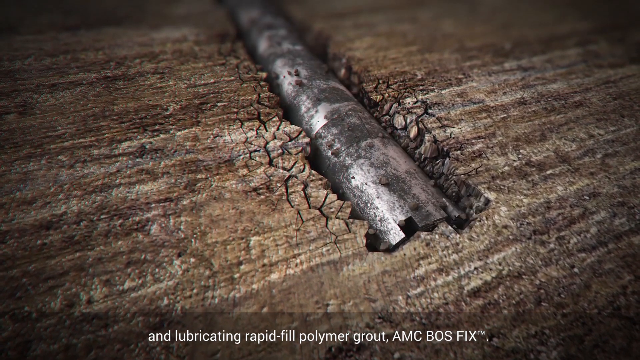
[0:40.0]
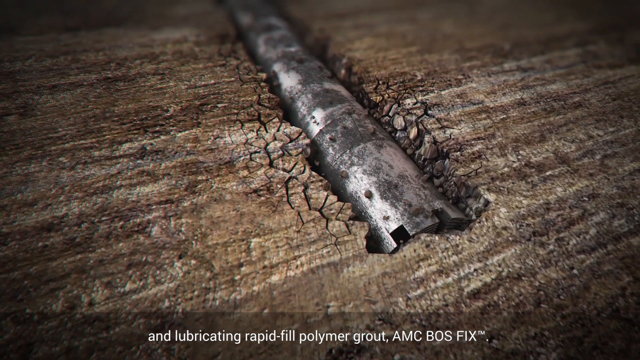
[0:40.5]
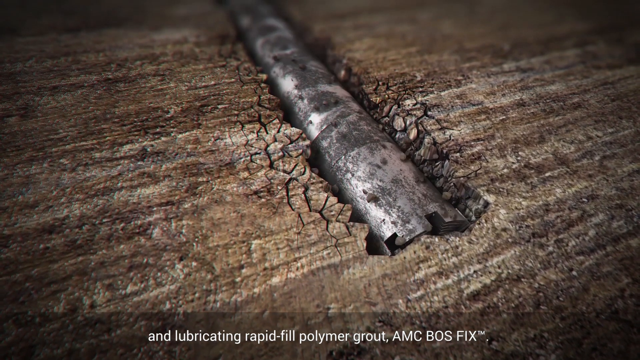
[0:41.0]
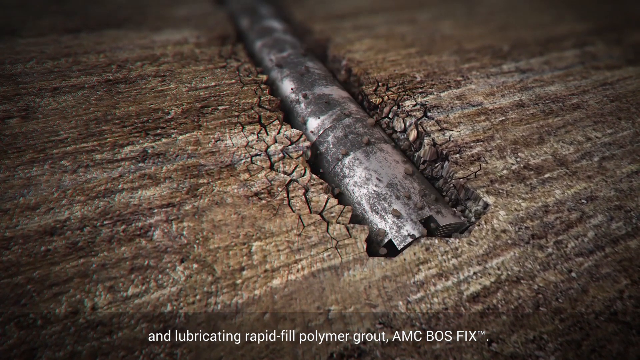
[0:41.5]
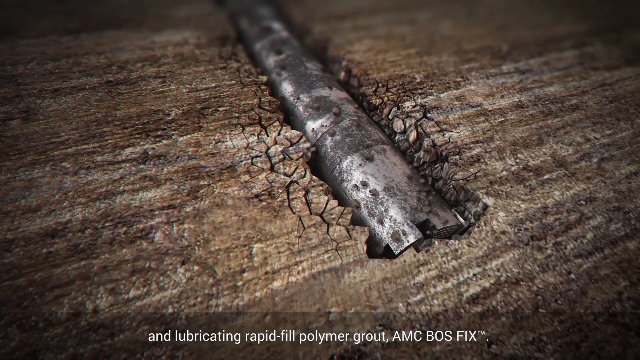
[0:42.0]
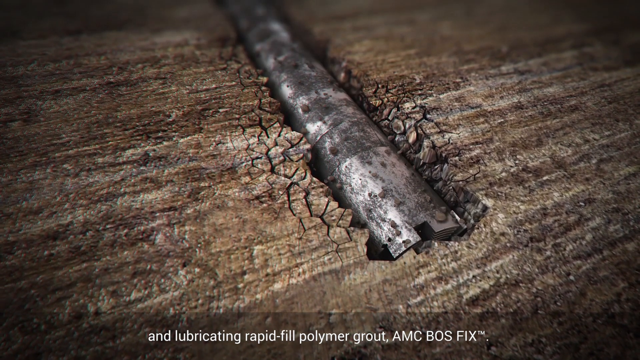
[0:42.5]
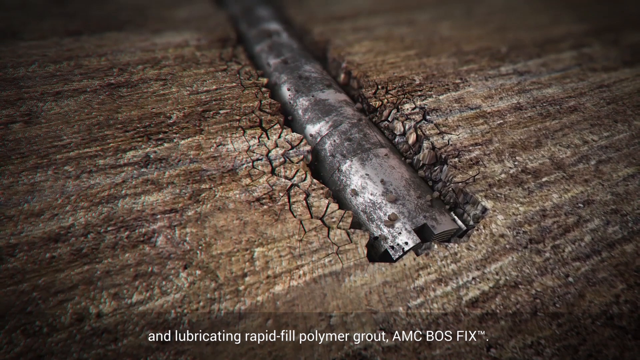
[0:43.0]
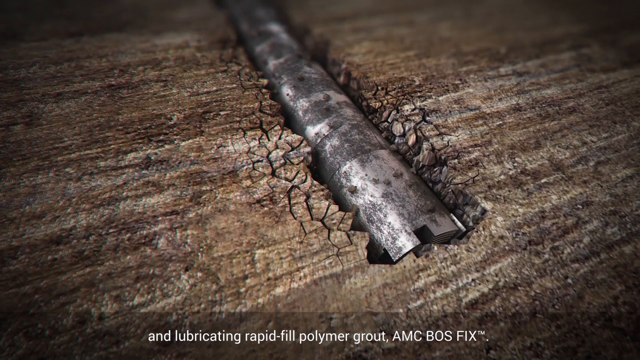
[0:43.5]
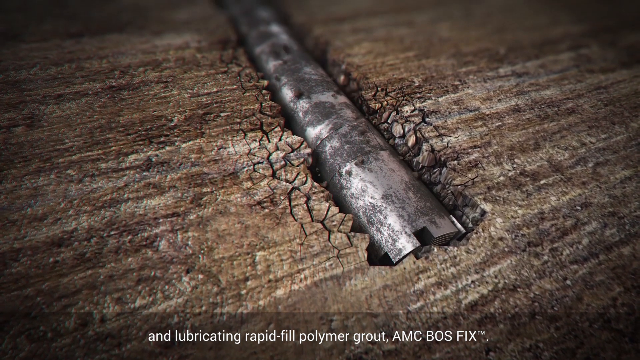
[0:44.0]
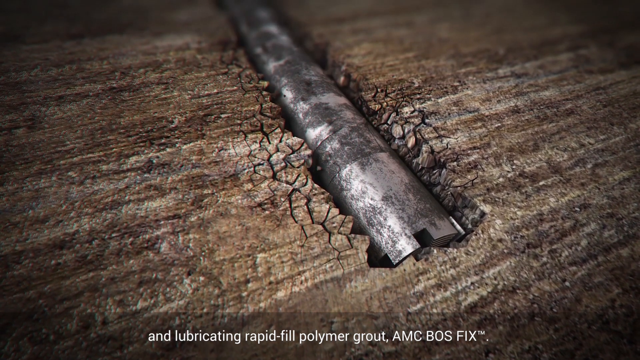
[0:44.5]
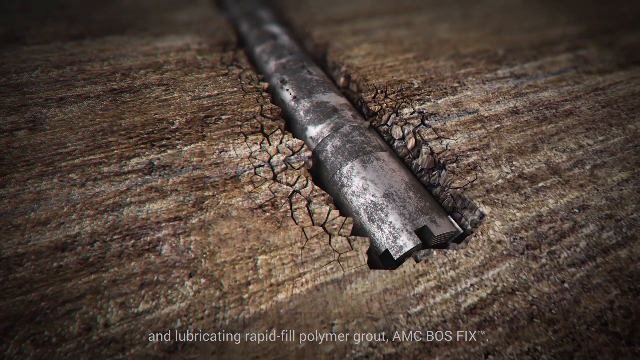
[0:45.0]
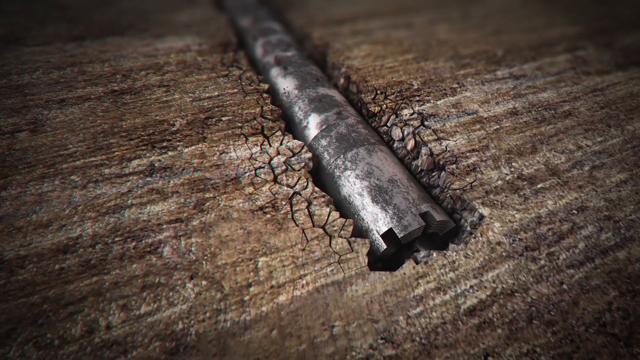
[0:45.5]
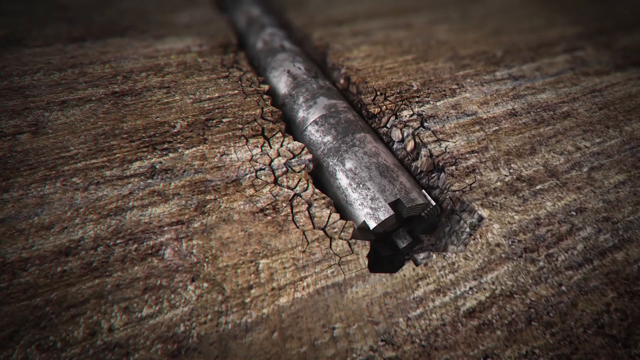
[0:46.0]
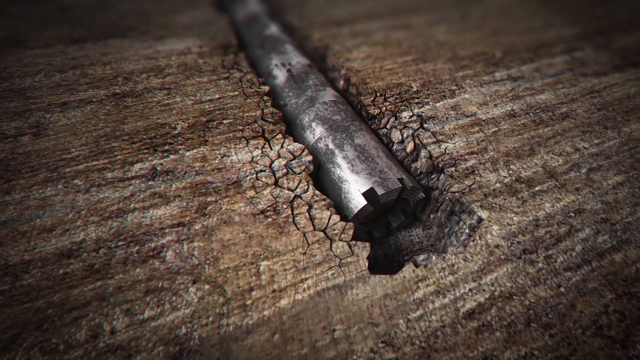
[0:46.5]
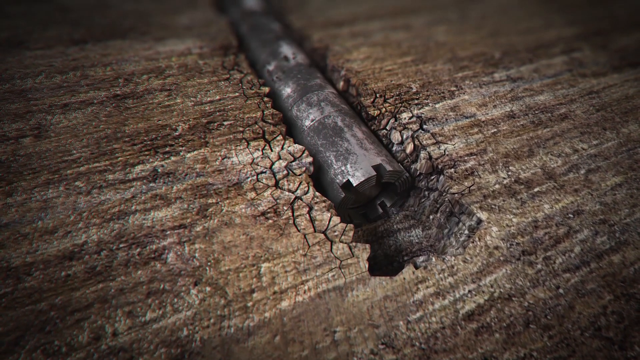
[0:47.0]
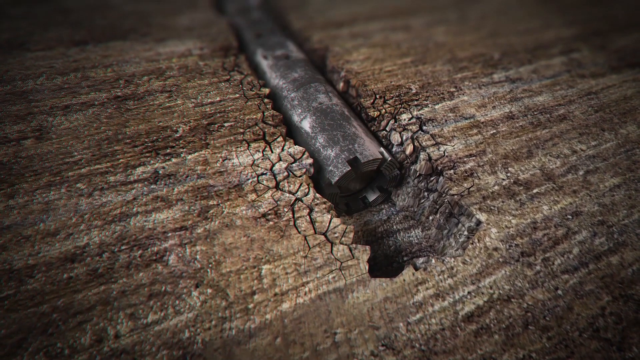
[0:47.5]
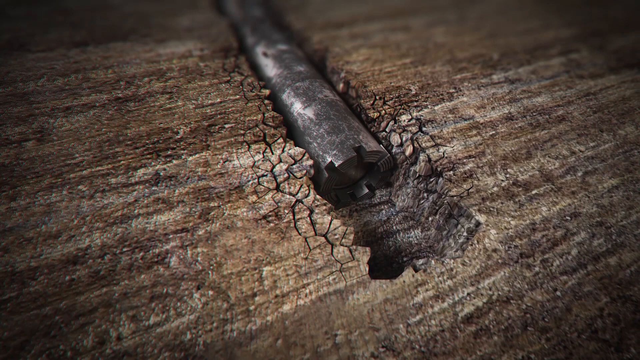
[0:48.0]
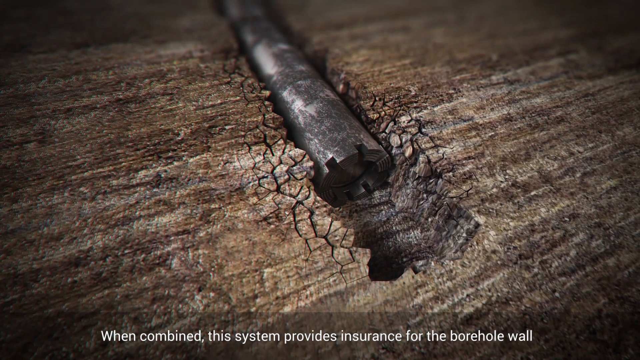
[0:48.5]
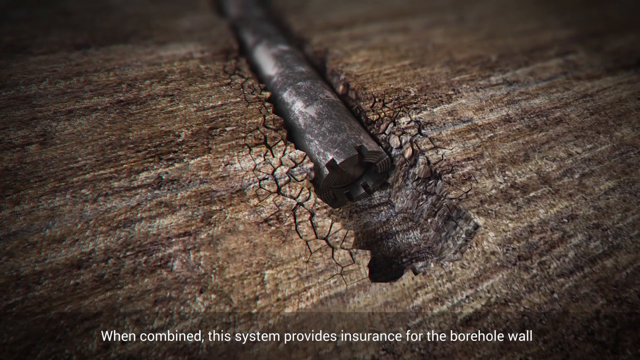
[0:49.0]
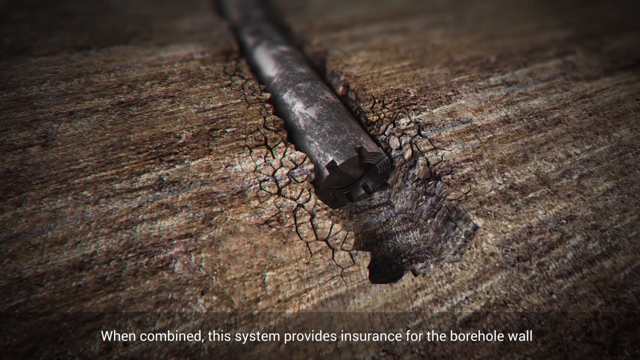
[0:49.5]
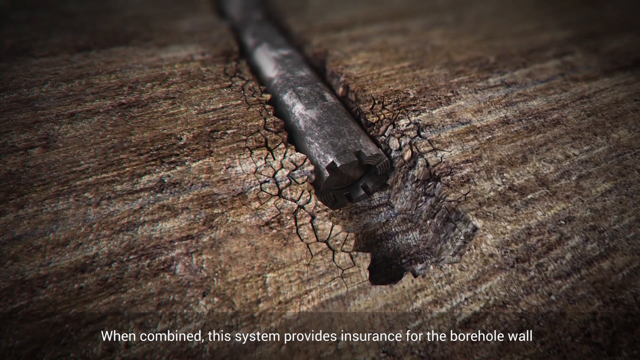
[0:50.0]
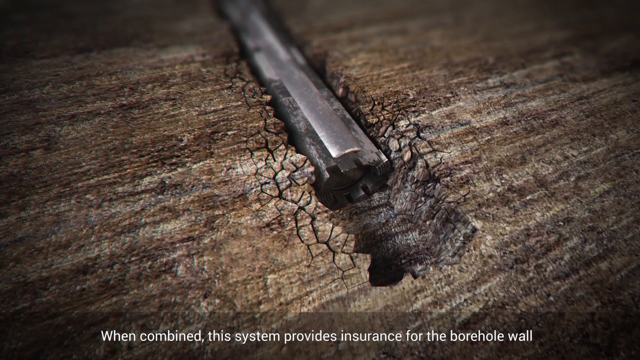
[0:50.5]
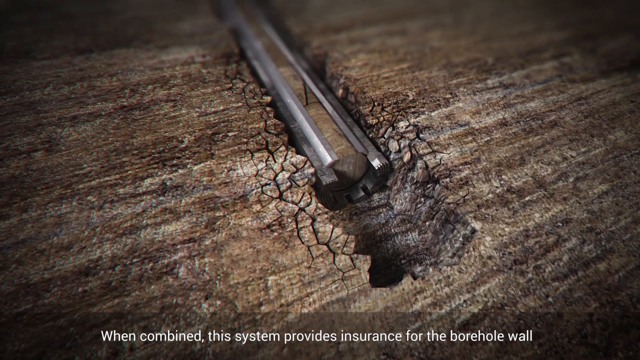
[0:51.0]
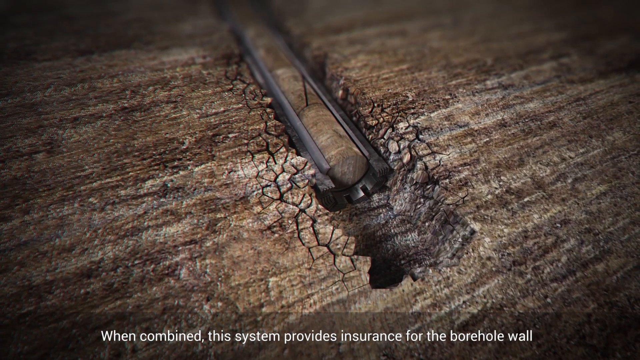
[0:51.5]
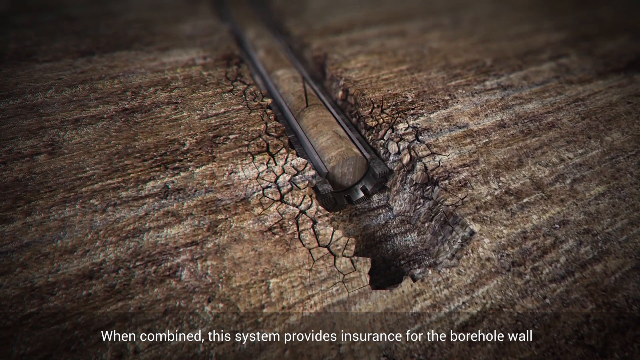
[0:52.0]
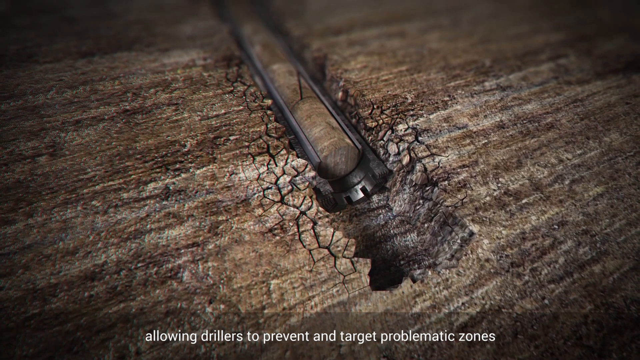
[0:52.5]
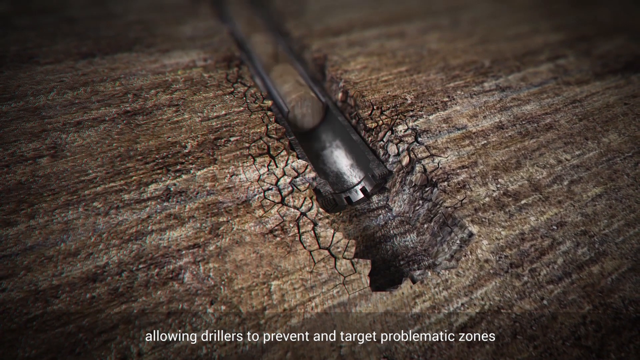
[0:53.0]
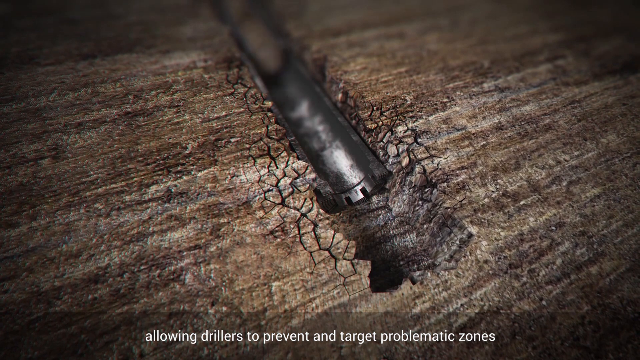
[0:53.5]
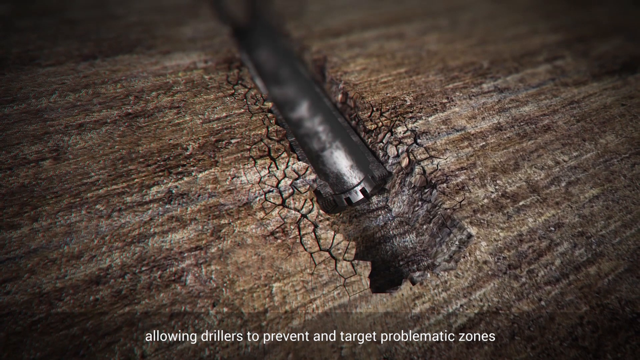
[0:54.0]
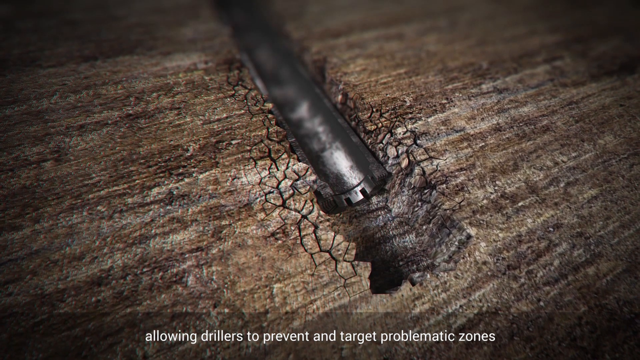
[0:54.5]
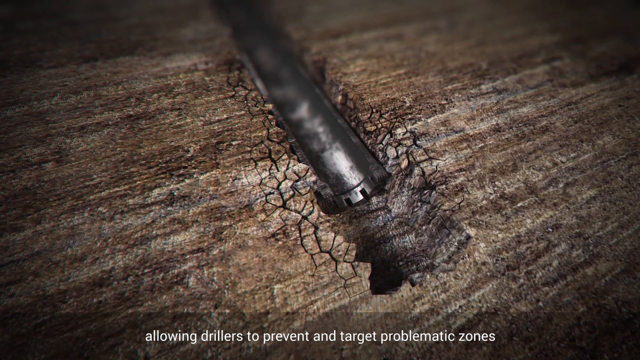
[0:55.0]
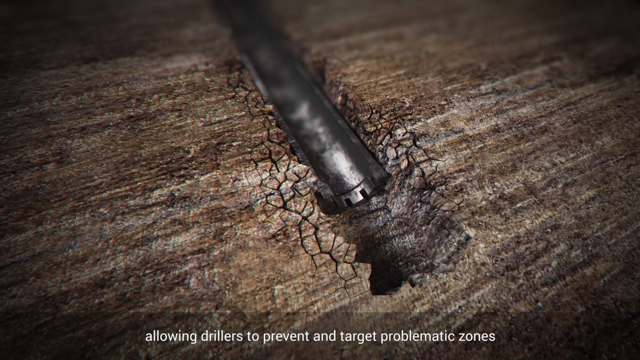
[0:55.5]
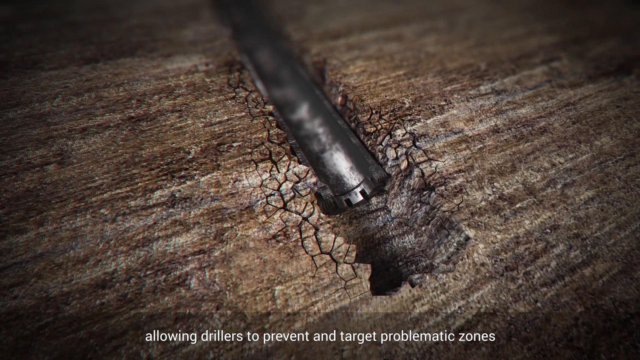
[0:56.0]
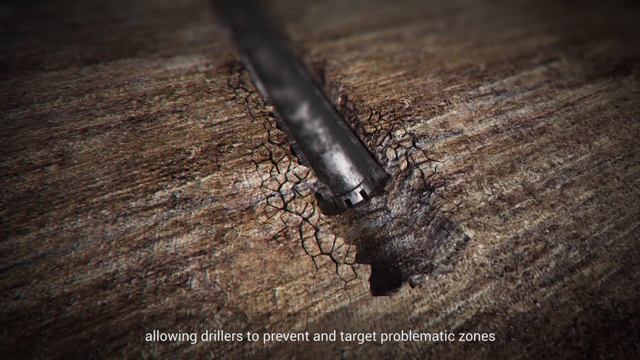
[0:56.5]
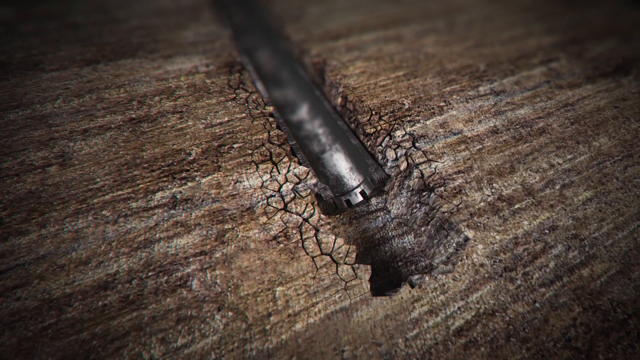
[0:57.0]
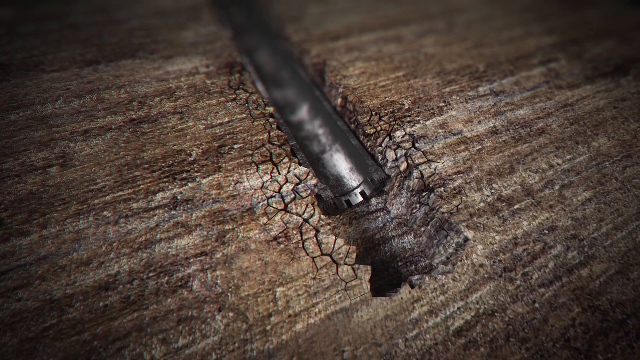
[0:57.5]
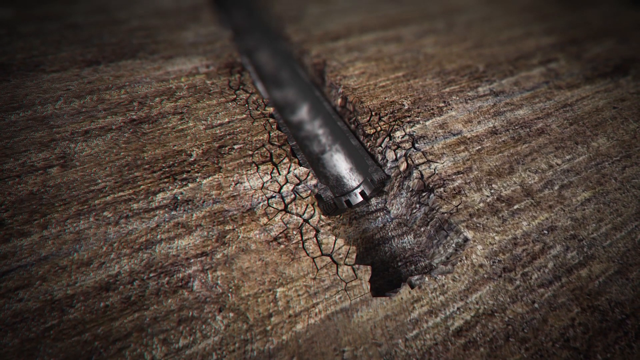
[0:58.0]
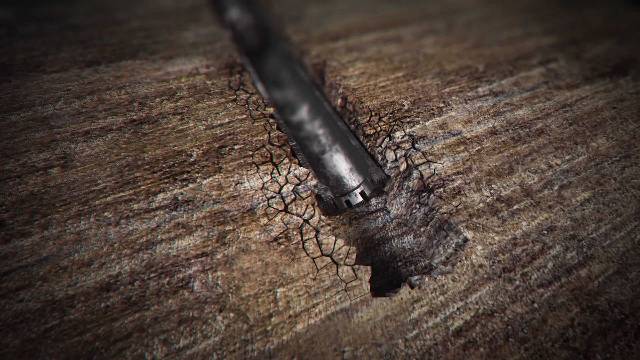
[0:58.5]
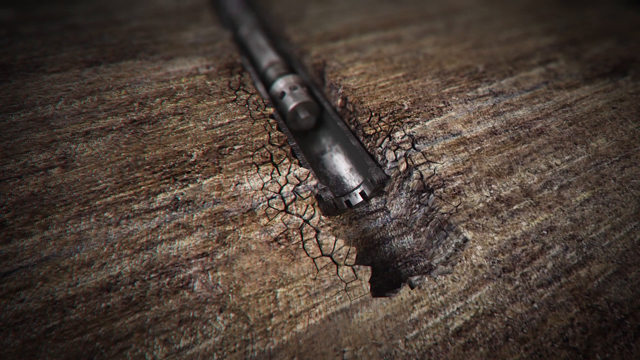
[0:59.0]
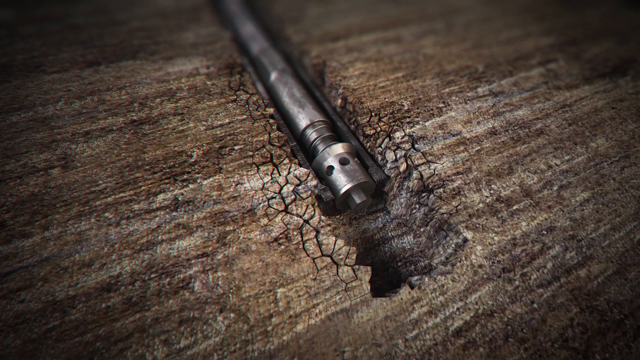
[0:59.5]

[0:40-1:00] The drill bit continues through the rock and is then retracted, pulled back. The inside is exposed, and in the core of the drill bit is material that has been drilled and caught up inside it. The inside of the drill bit is pulled out from the drill casing, and the original drill piece comes back down through the drill bit. The drilled rock particles look like they have been discarded, and the drilling continues. It seems to be a continuous process in which the inner casing discards the pieces it has picked up when it becomes full, allowing the full drill bit to come back down through the shaft and keep drilling further.